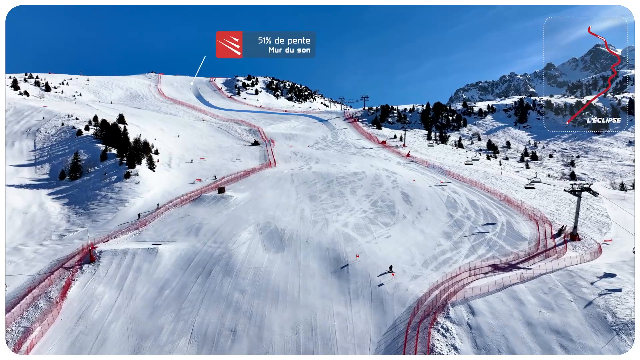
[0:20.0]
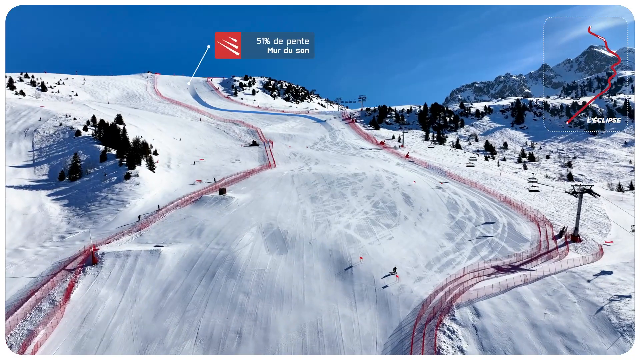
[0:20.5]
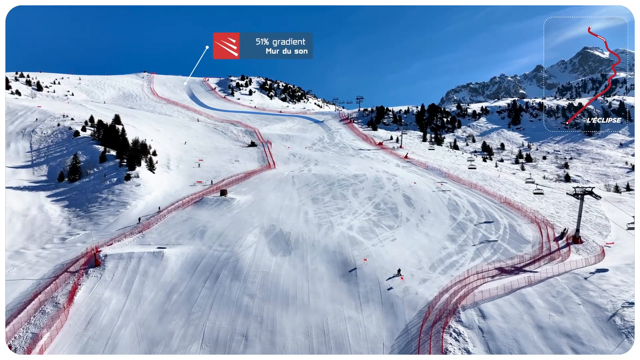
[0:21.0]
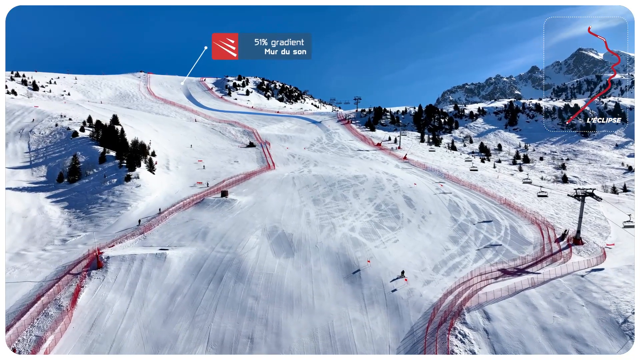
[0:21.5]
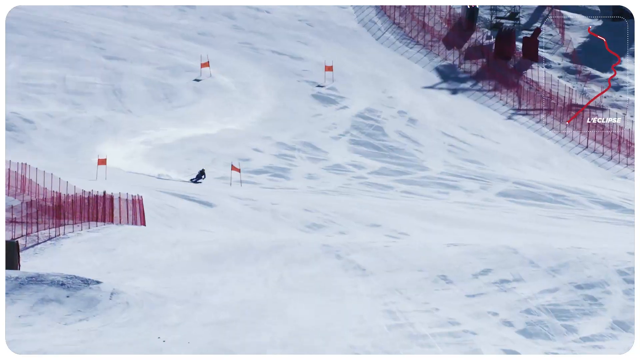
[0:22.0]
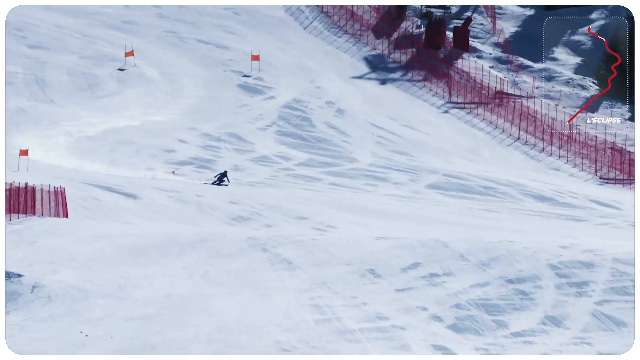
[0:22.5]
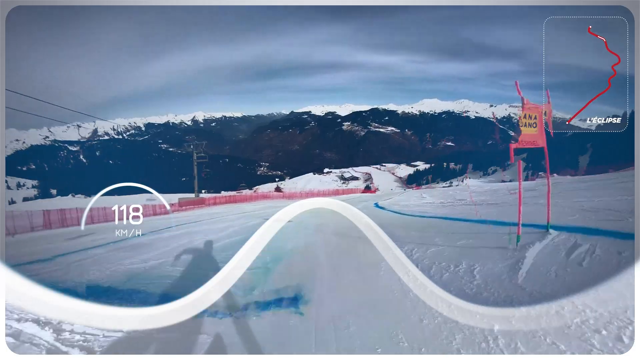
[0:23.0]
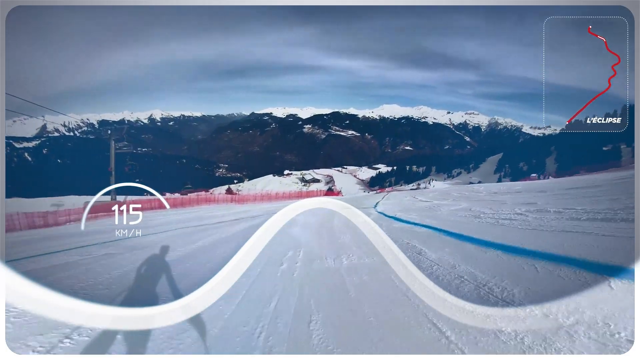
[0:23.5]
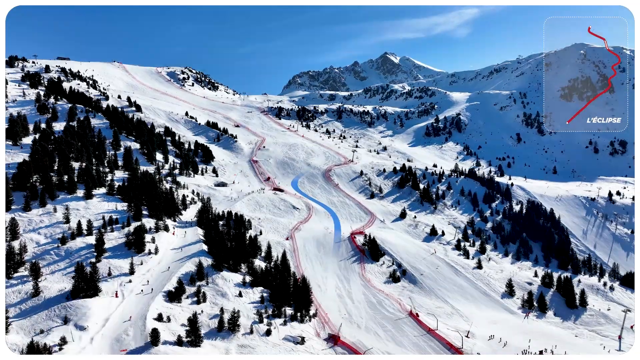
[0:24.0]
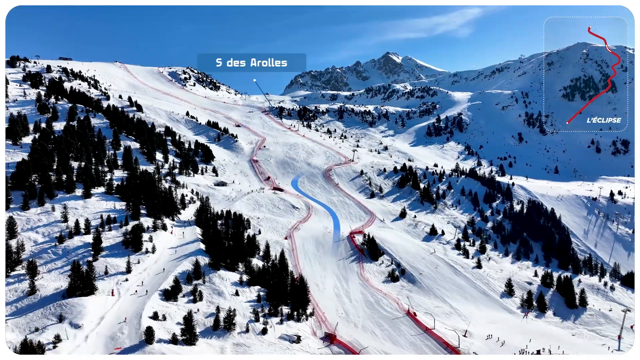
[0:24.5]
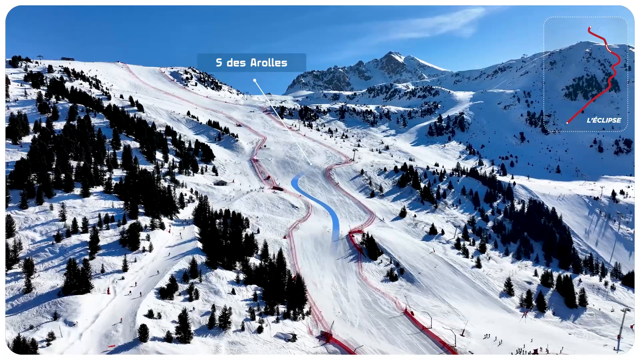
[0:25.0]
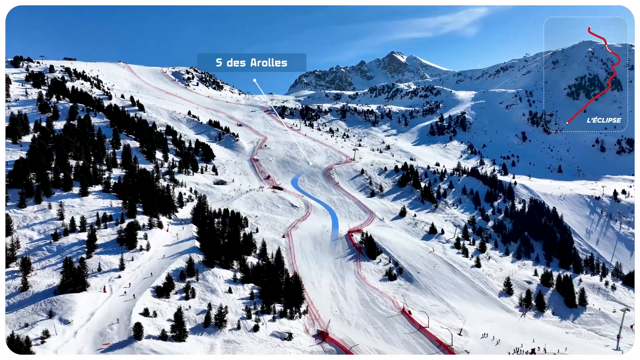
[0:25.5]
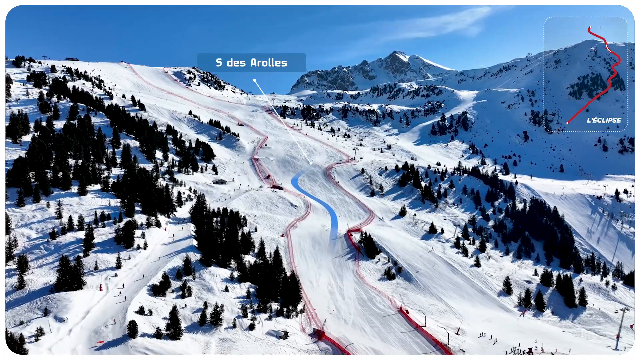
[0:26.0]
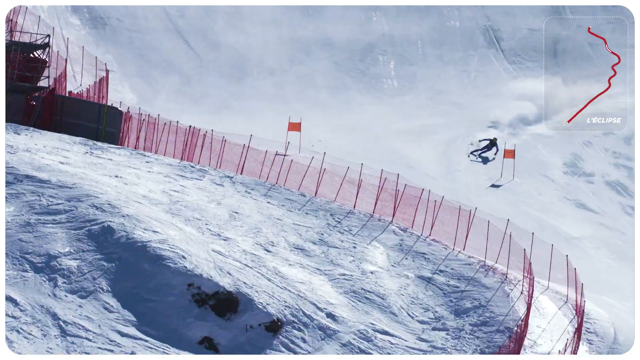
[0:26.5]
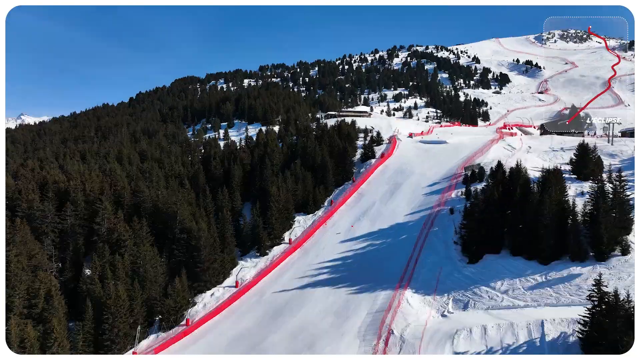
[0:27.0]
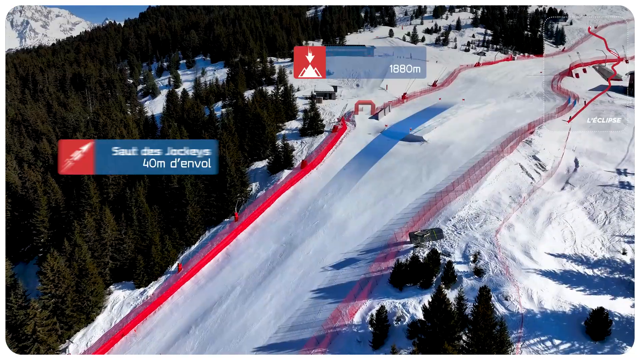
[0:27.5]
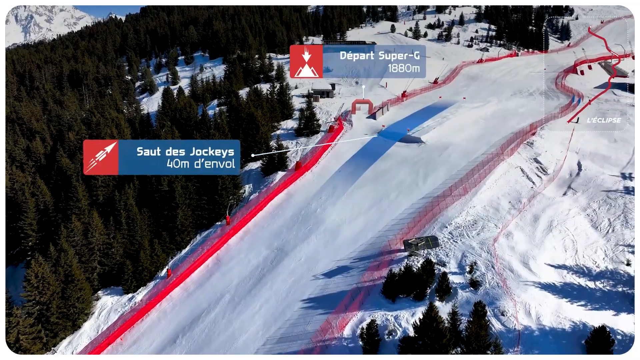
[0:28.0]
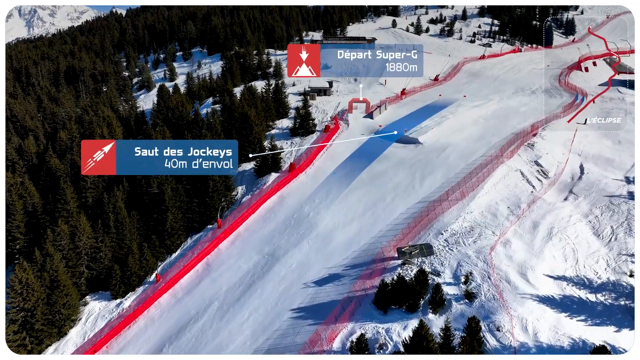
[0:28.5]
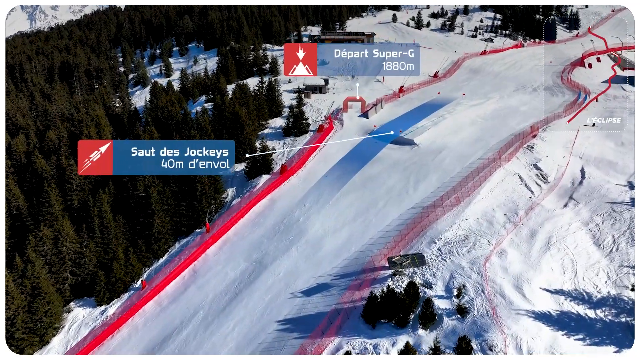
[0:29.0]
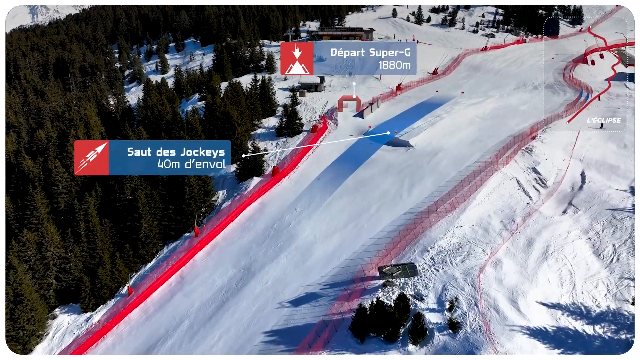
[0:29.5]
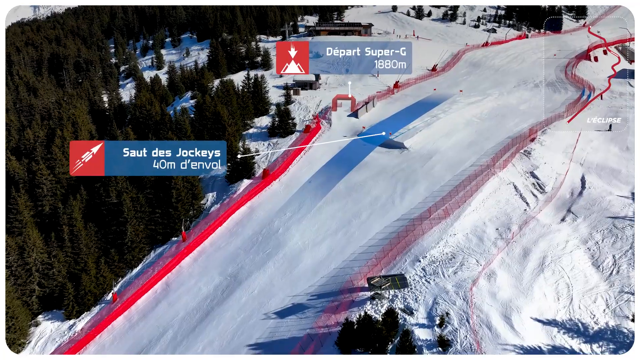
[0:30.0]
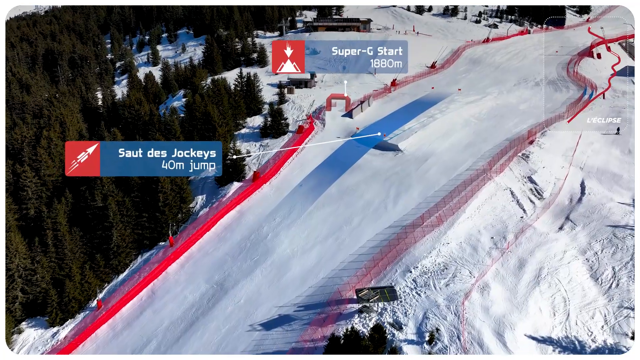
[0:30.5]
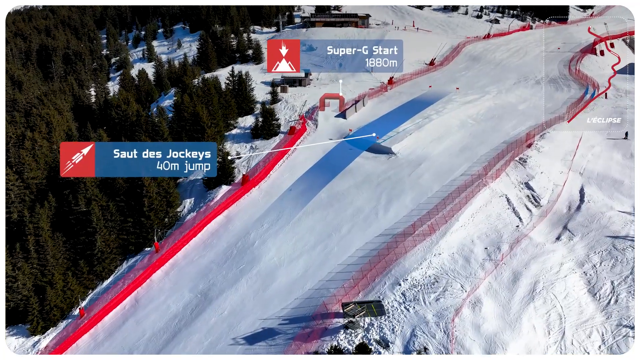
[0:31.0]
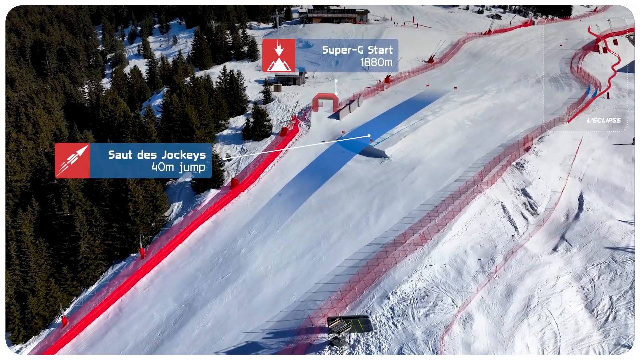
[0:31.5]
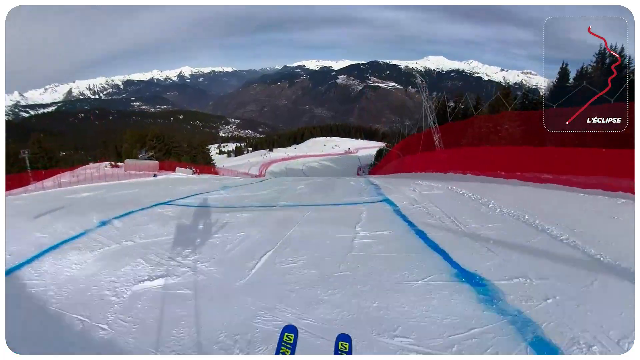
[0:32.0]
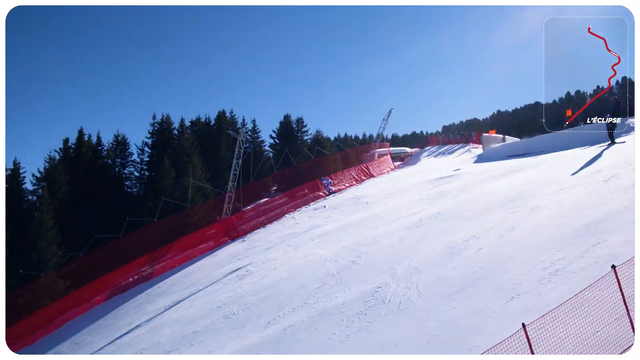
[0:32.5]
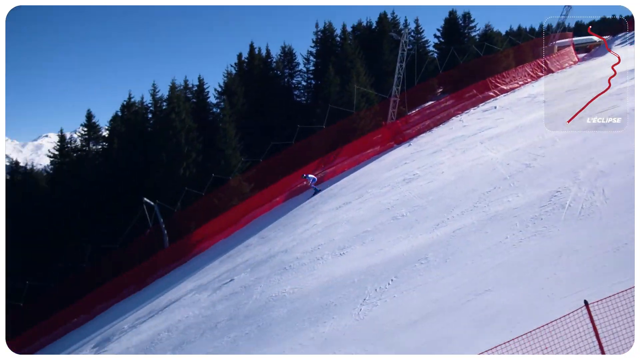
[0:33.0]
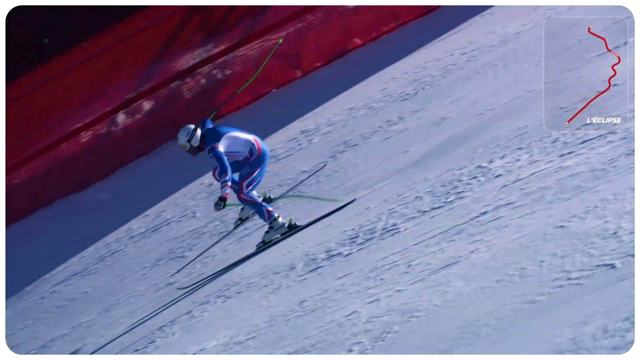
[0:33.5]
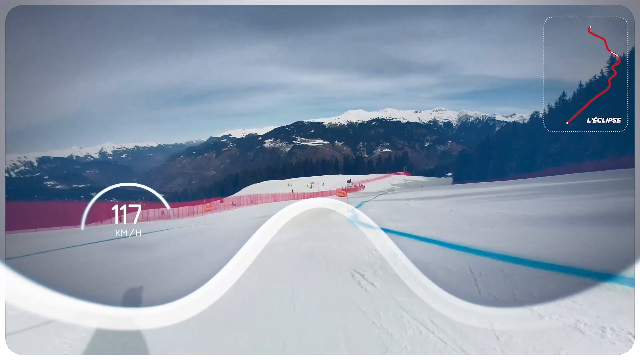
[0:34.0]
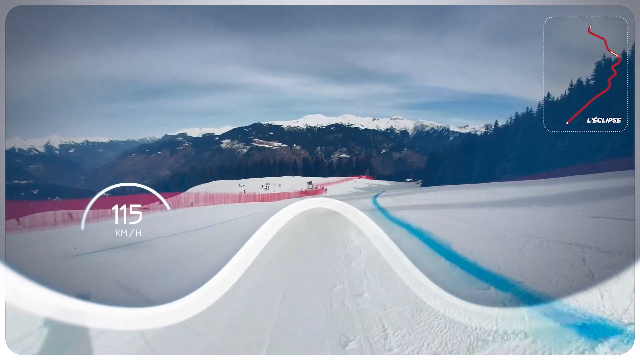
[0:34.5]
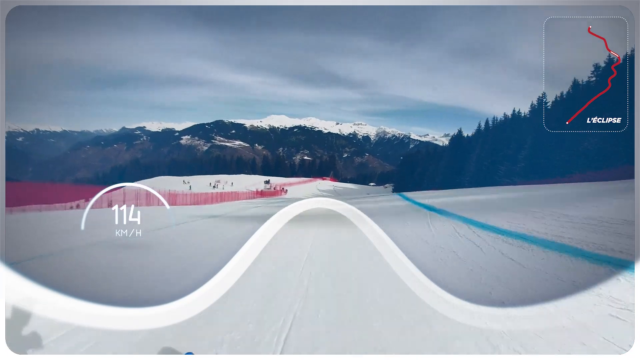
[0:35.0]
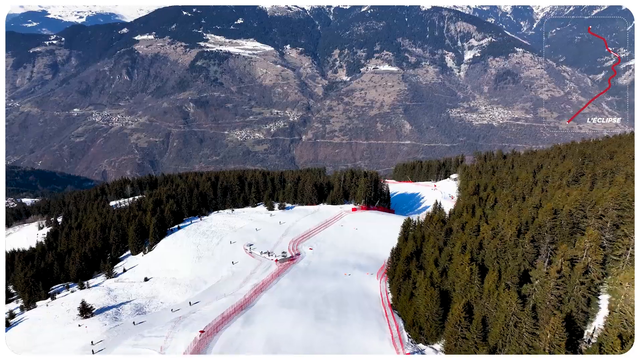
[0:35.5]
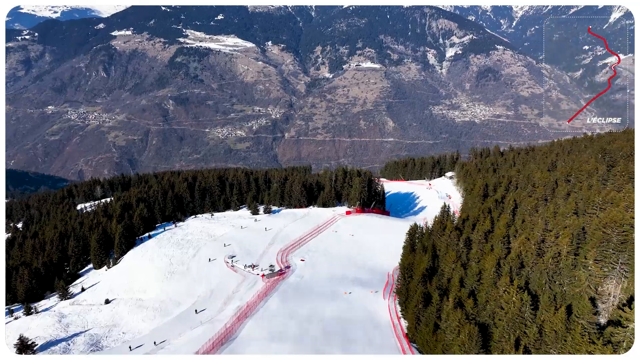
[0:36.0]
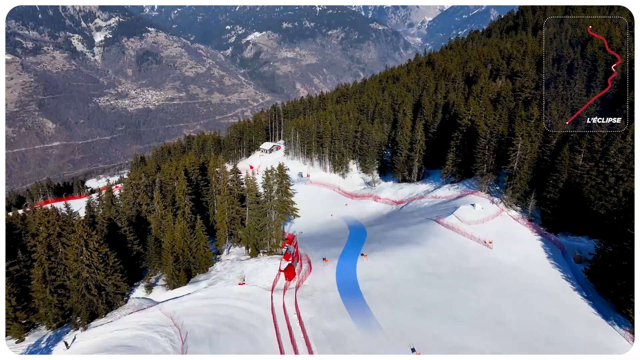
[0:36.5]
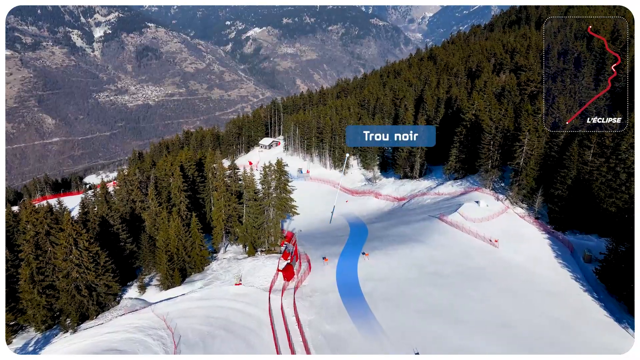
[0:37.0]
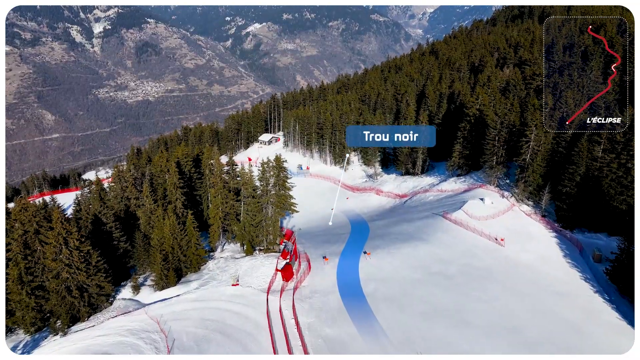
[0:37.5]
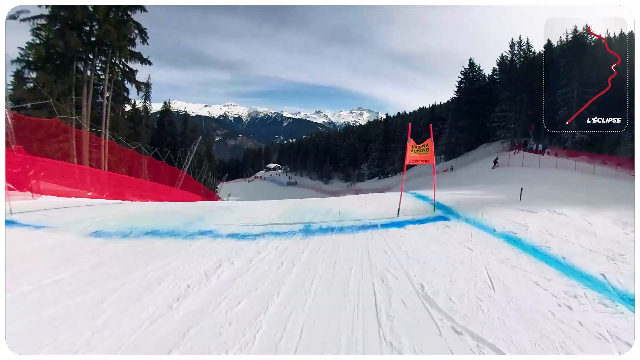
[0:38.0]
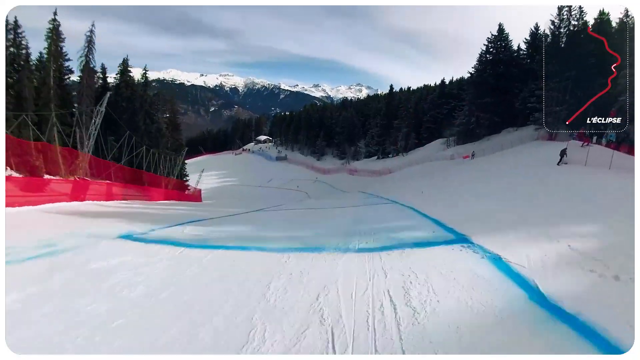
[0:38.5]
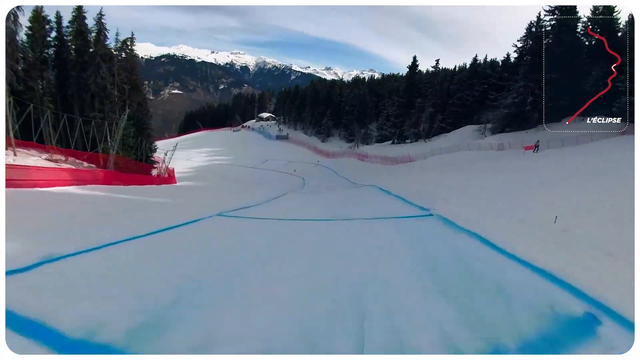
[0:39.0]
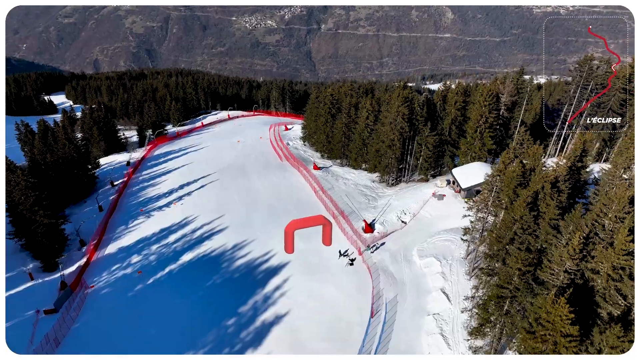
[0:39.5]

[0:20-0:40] The track is shown with some participants on it. Certain levels and points along the course are shown, possibly marking skill or difficulty levels. A graphic shows the potential speed some of the skiers might reach going down, well over a hundred, with the unit unclear. The course includes added small jumps and certain areas the skiers apparently must pass through.